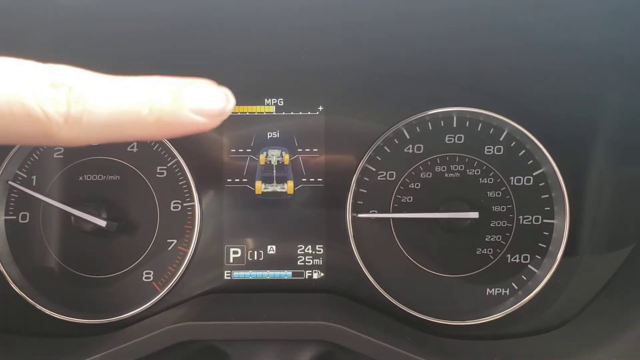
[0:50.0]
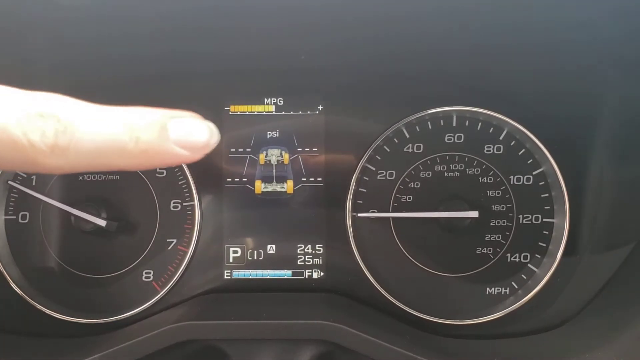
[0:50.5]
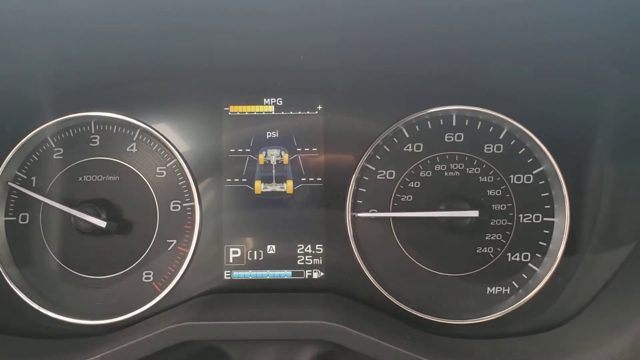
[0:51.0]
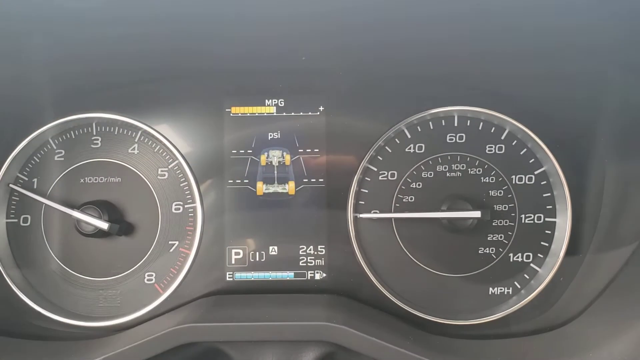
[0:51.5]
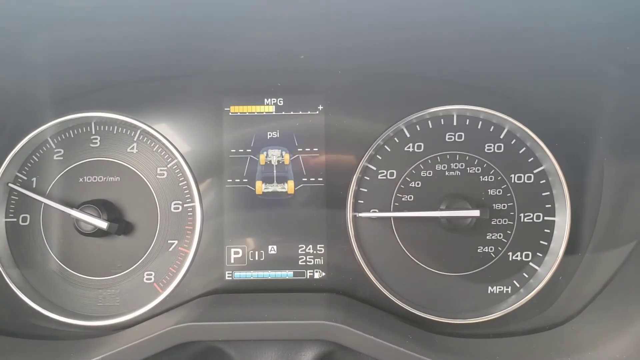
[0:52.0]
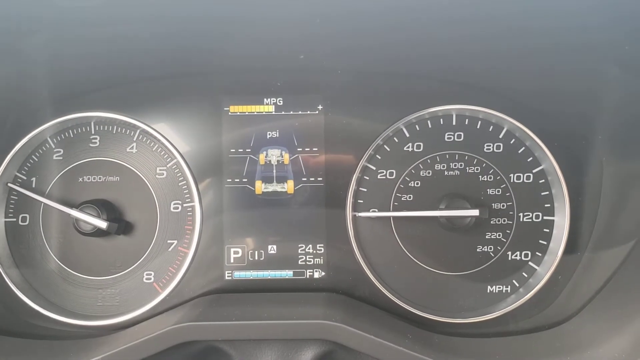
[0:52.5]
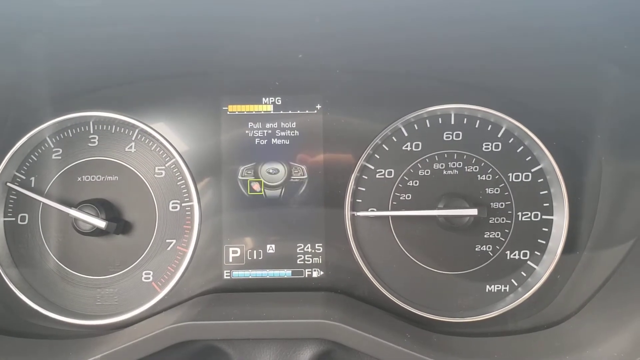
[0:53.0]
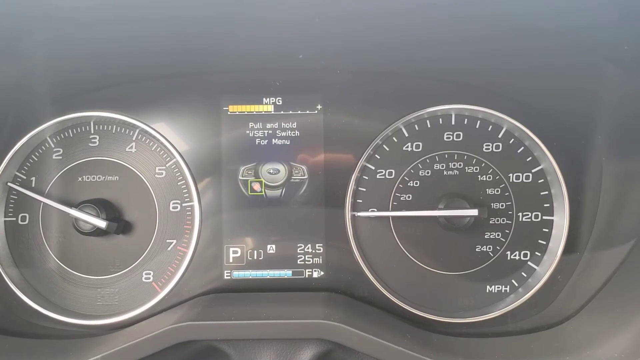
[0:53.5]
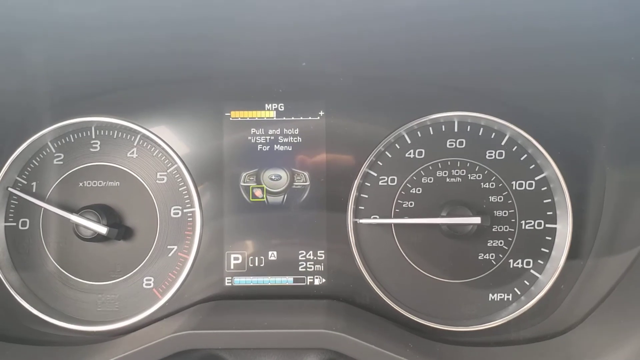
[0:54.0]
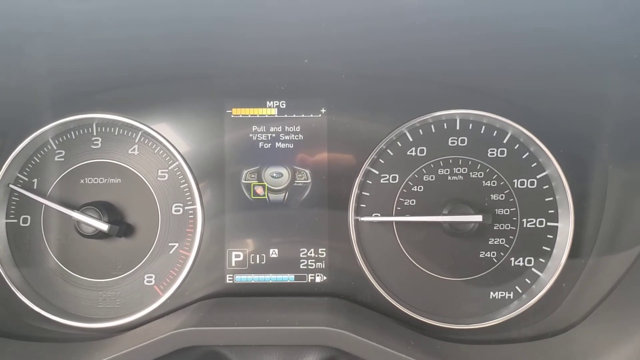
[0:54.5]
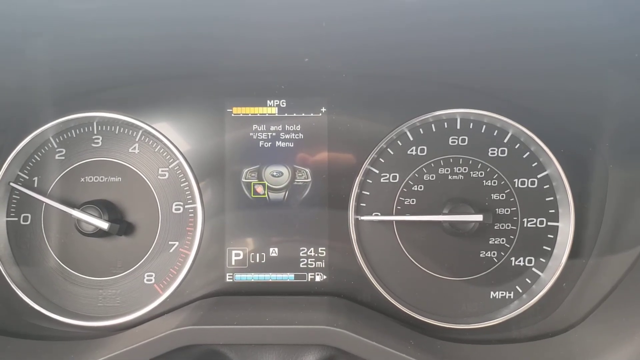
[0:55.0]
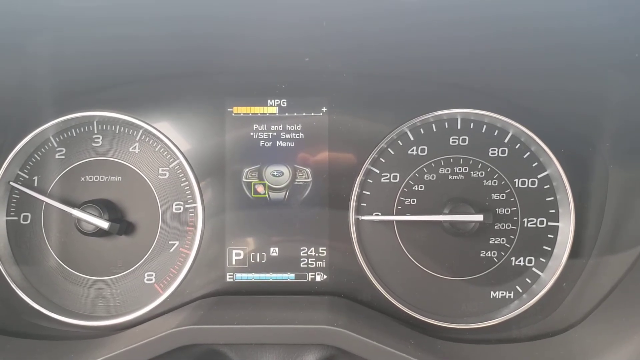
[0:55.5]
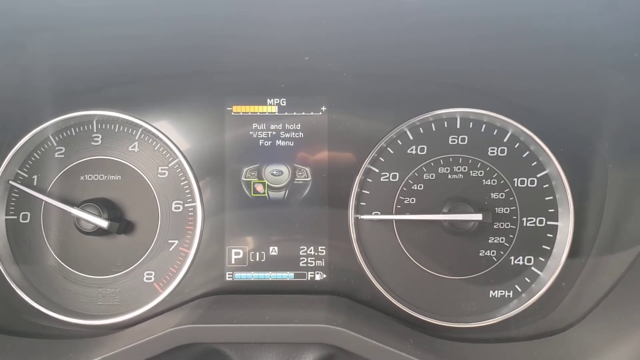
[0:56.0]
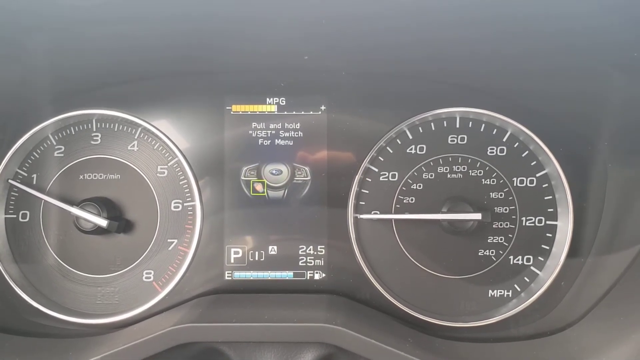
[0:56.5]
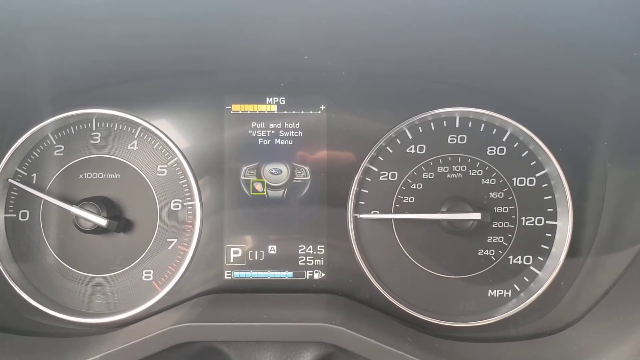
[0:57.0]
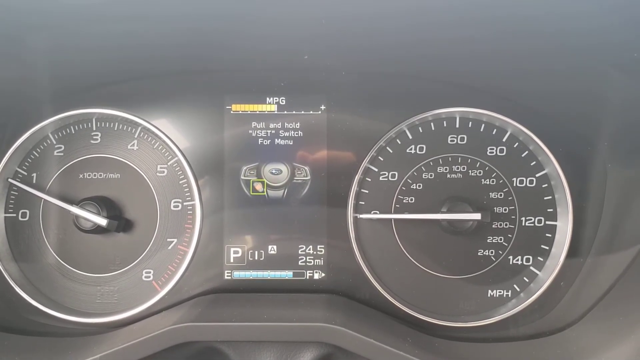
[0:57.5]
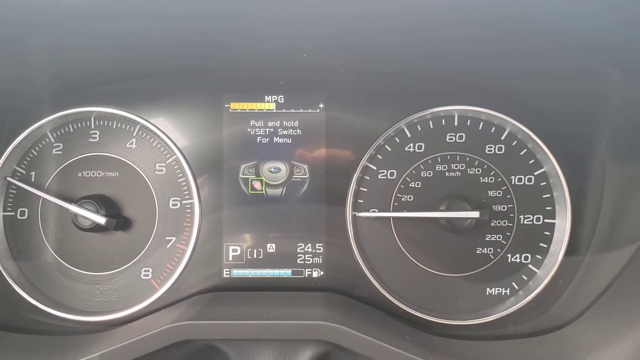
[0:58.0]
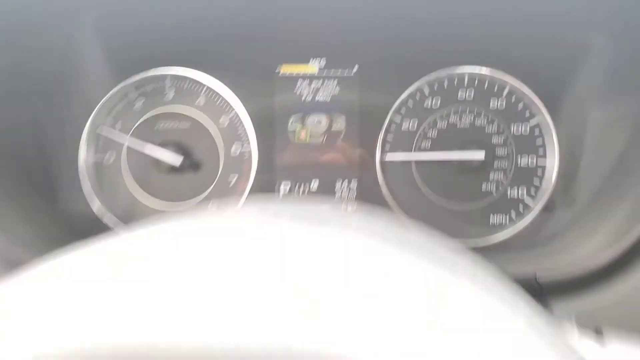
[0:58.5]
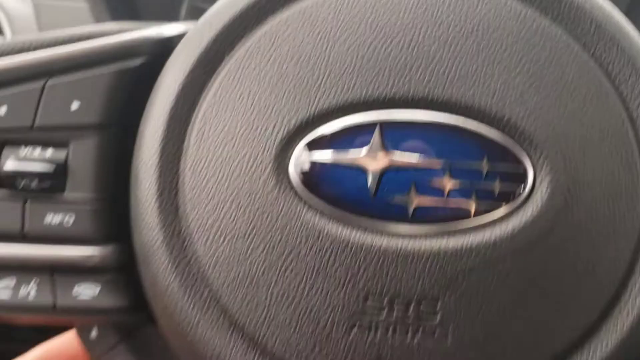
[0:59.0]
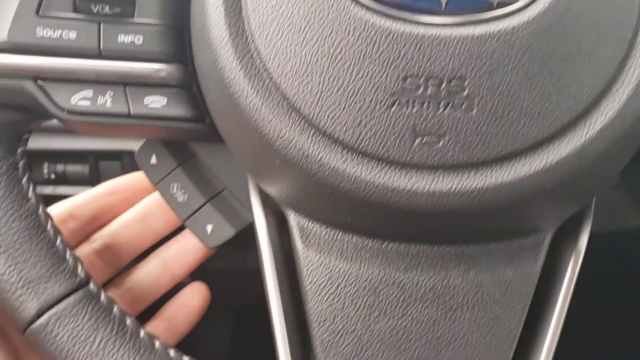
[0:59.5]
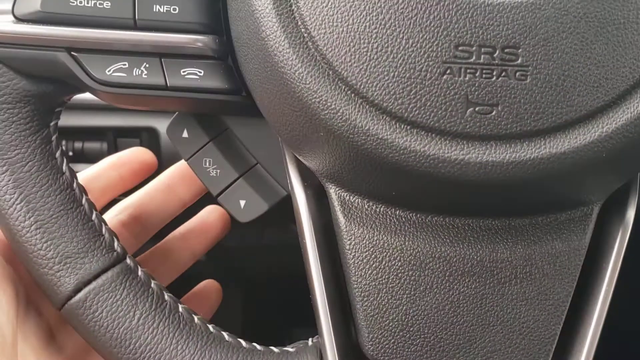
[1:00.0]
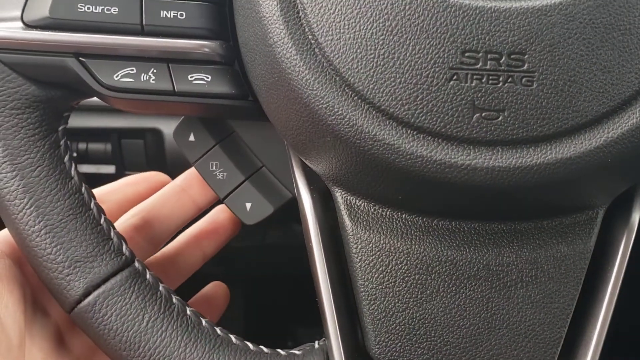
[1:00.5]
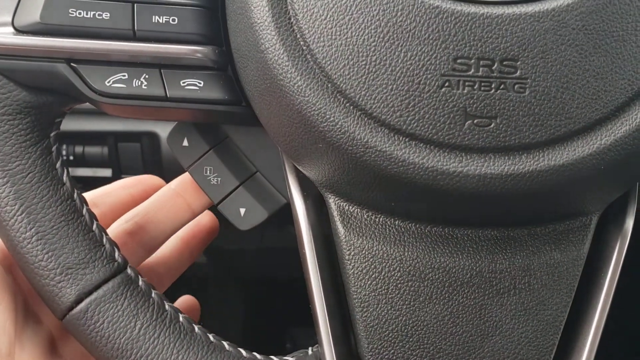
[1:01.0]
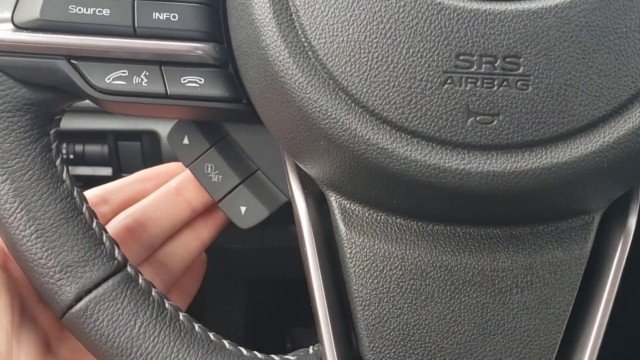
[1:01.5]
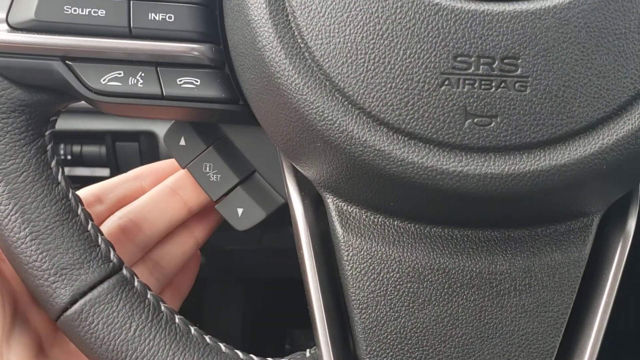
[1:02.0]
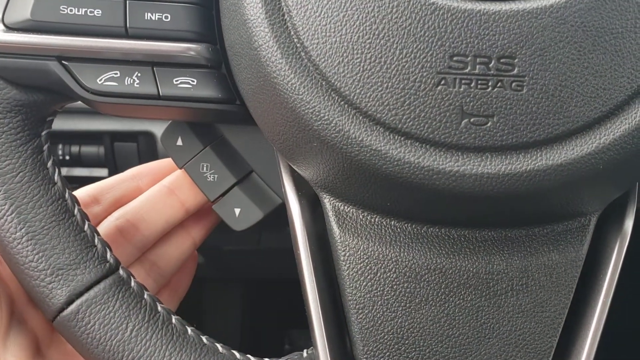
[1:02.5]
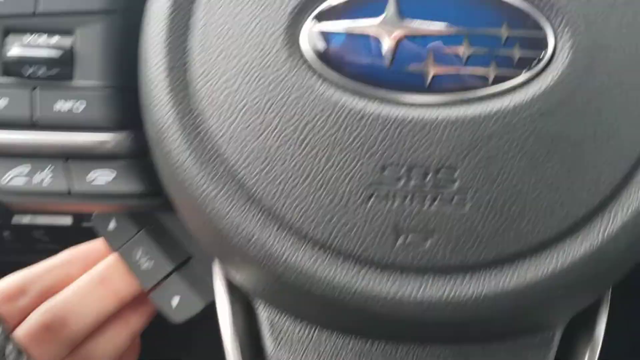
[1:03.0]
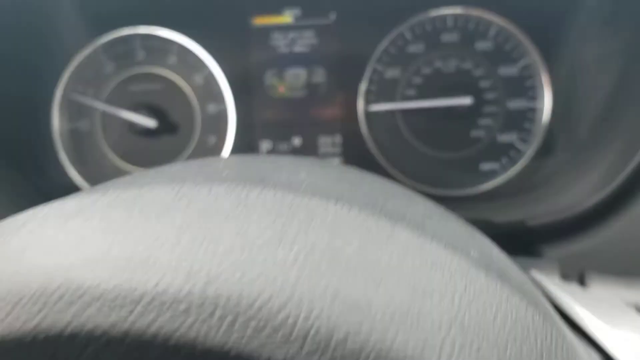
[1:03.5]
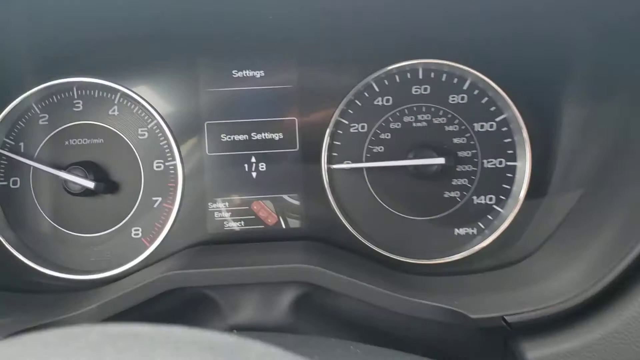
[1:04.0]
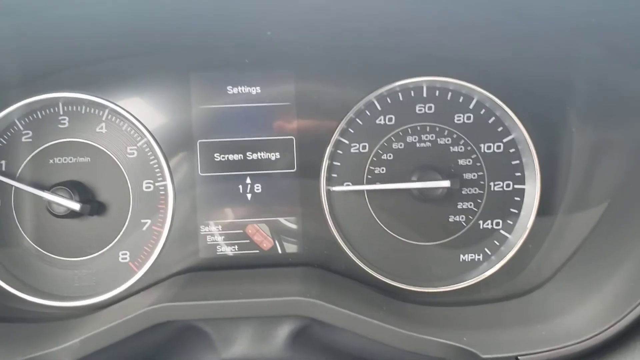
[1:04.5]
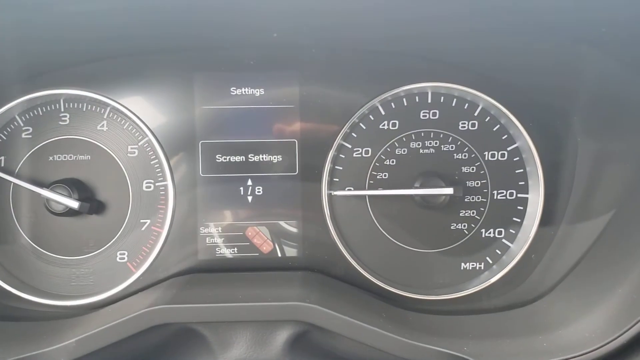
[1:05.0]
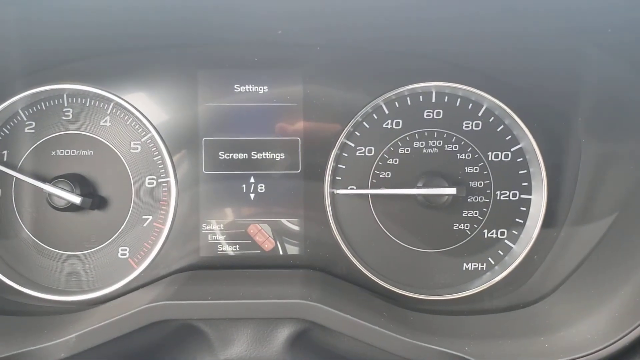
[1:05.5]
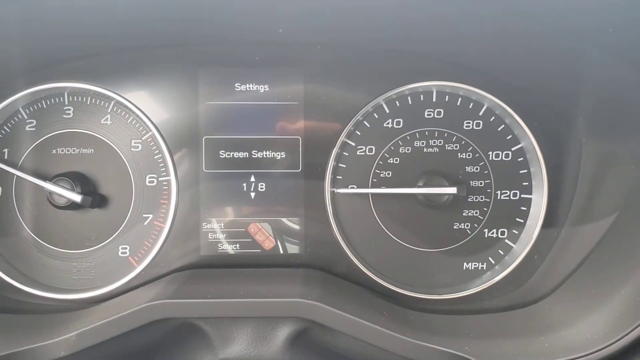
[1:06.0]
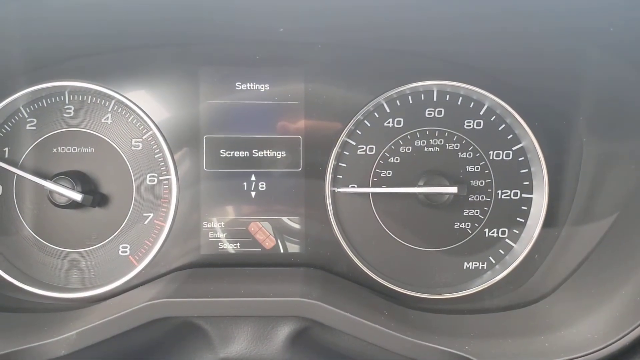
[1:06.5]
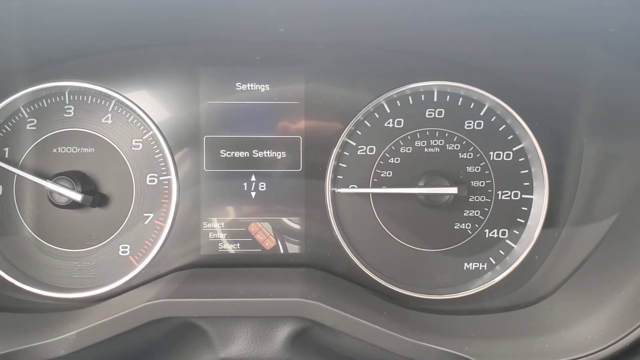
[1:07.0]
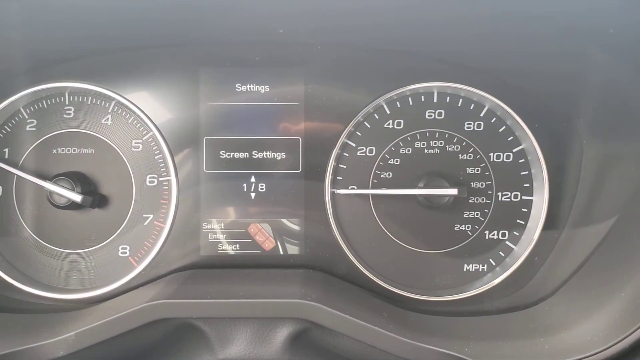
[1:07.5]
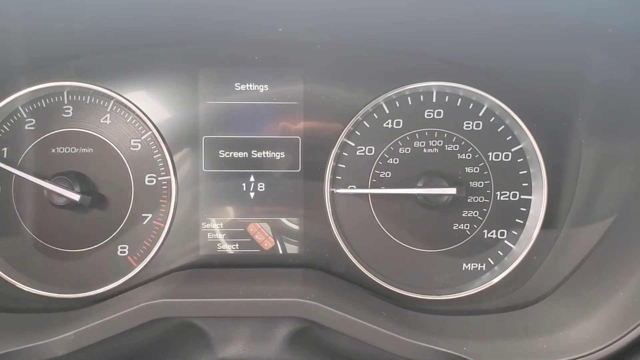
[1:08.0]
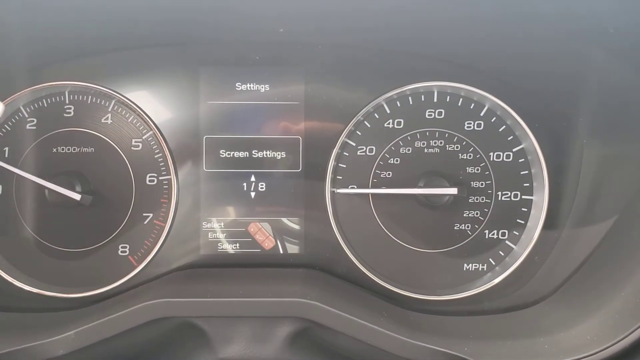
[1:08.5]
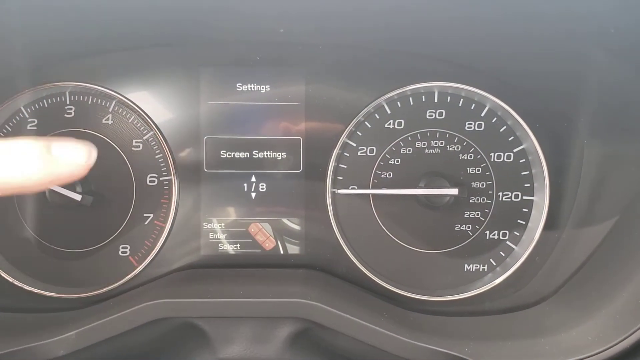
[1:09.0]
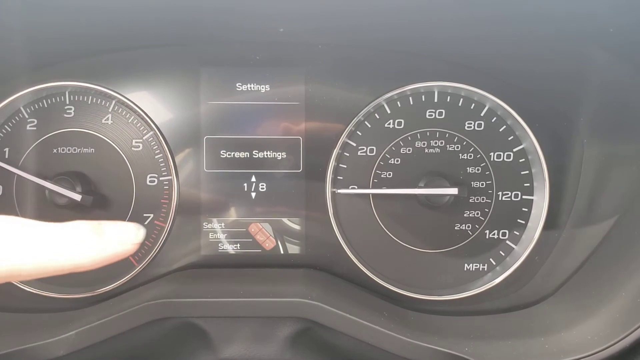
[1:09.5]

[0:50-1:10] The person points to the part of the screen that says "mpg". At the bottom there is a "P", and on the lower right it says "24.5" and "25 mpg". Underneath is a bar that is mostly full up to the light blue part, apparently showing the tank about three-fourths full. He looks at the MPG, looks down at the button, and then hits it. That area now says "settings" and "screen settings", along with what is either "1/8" or "1/B".